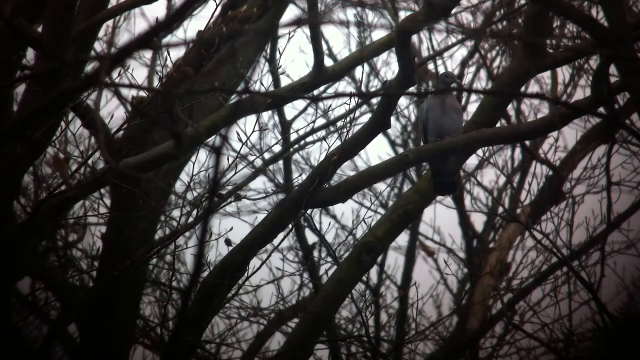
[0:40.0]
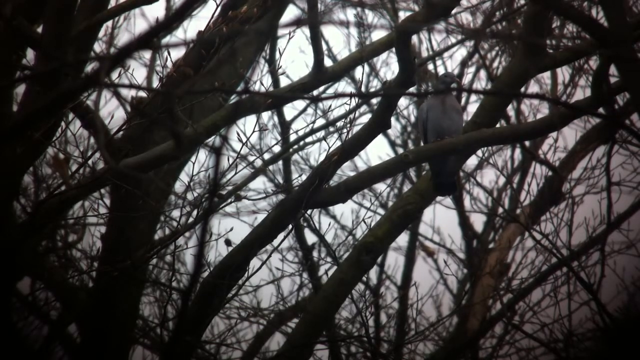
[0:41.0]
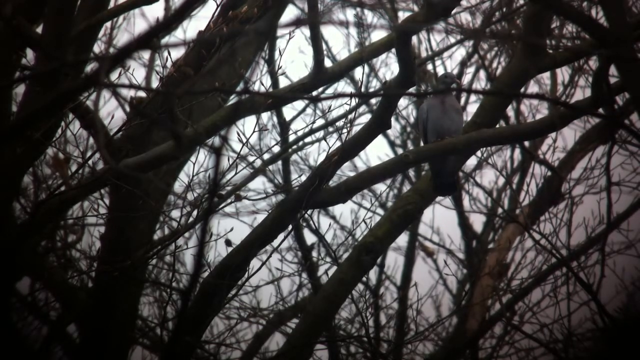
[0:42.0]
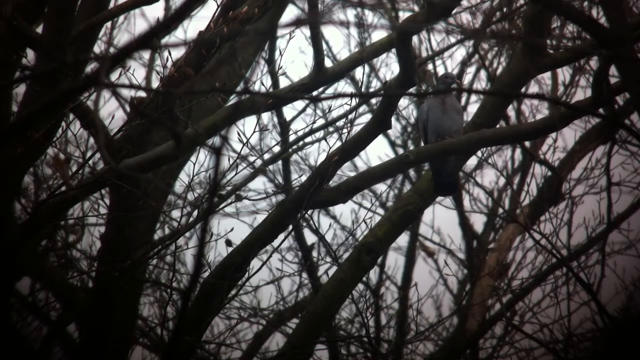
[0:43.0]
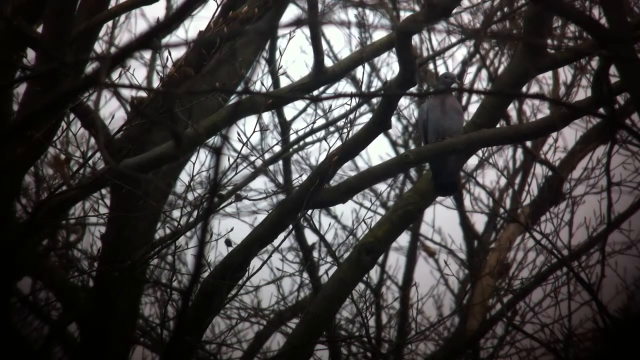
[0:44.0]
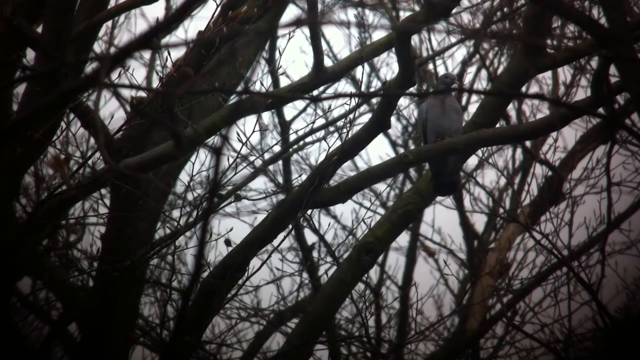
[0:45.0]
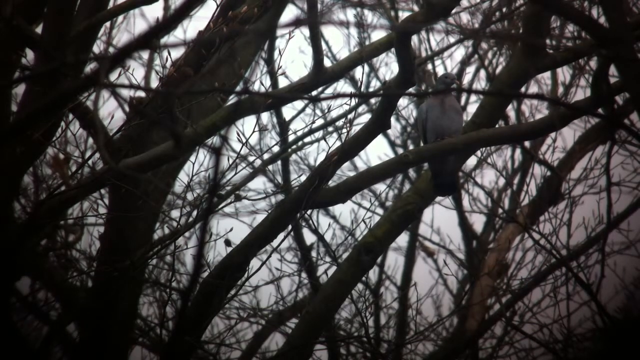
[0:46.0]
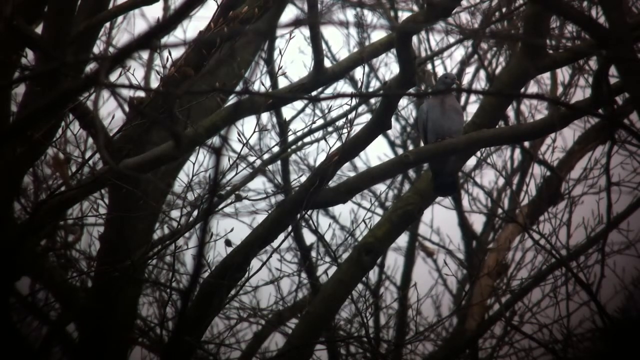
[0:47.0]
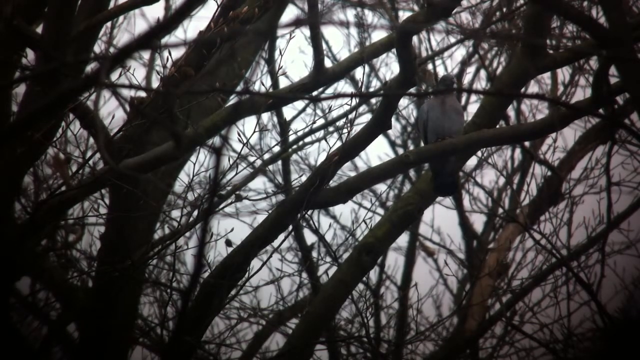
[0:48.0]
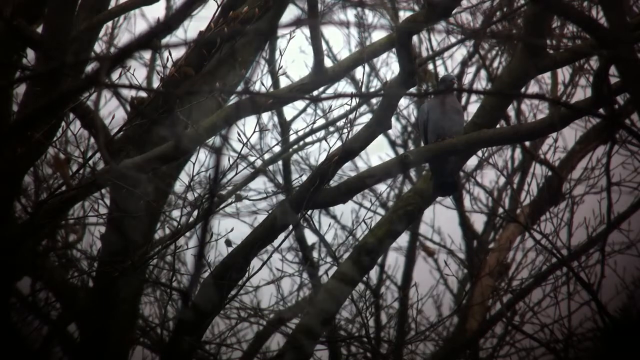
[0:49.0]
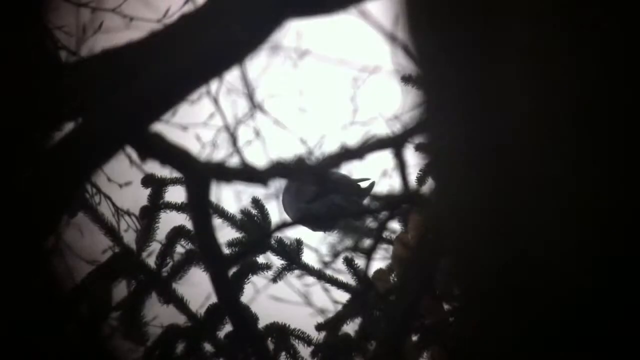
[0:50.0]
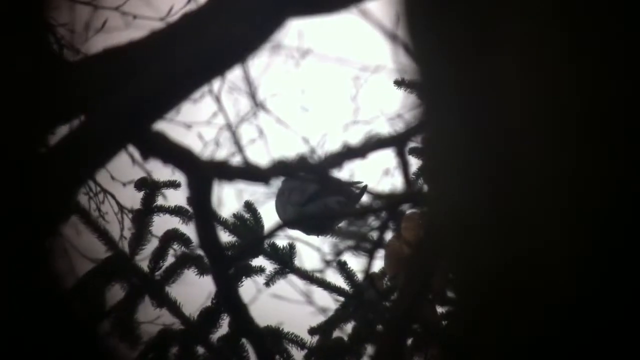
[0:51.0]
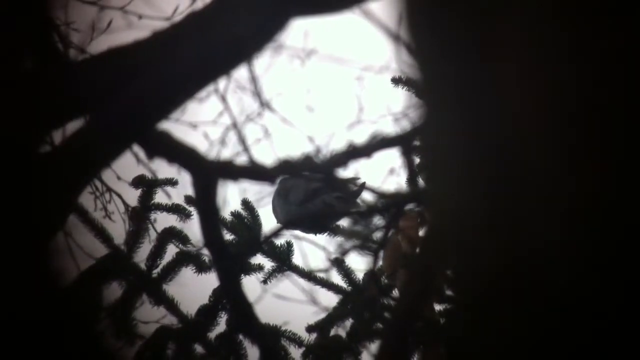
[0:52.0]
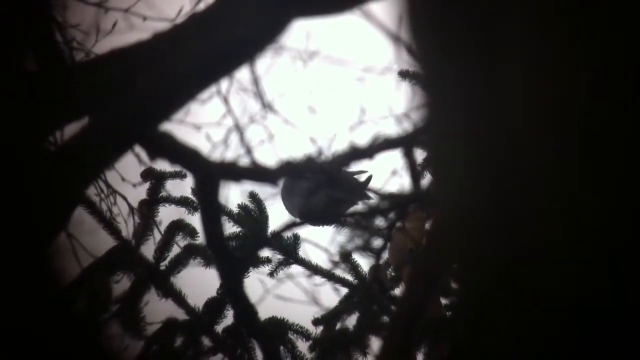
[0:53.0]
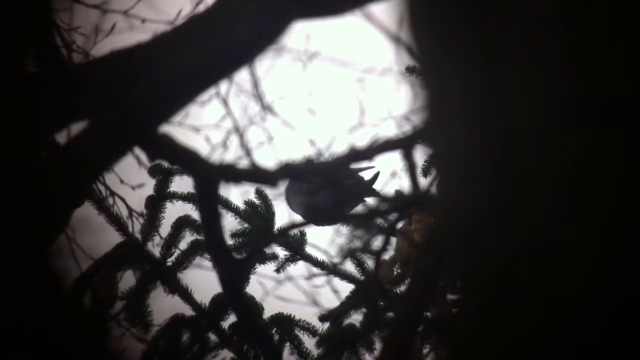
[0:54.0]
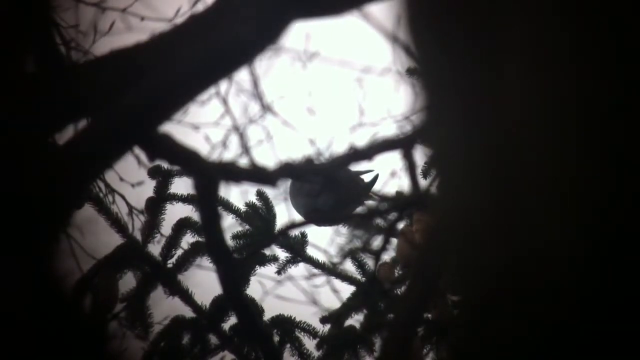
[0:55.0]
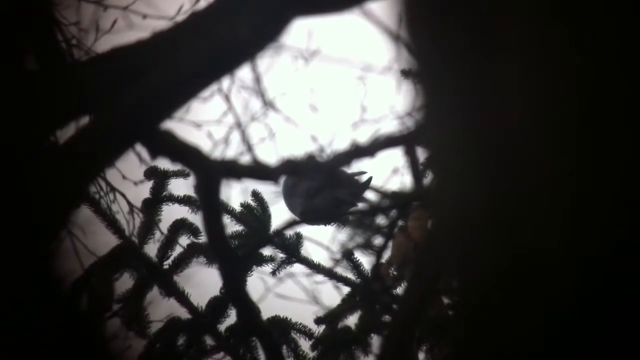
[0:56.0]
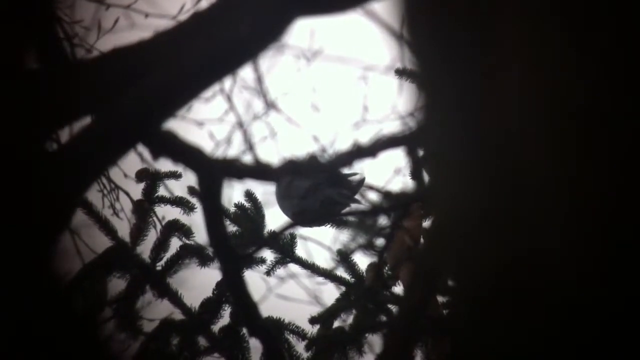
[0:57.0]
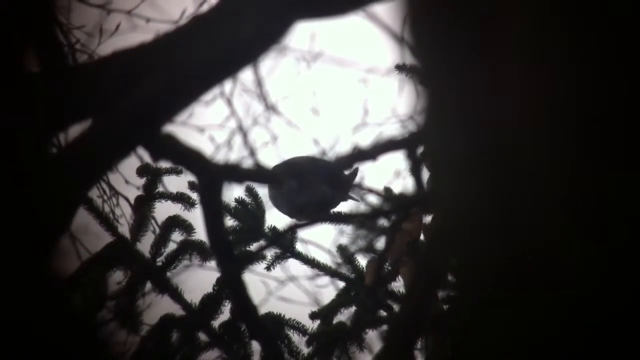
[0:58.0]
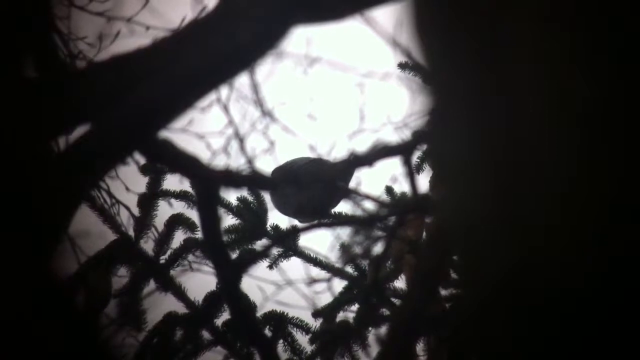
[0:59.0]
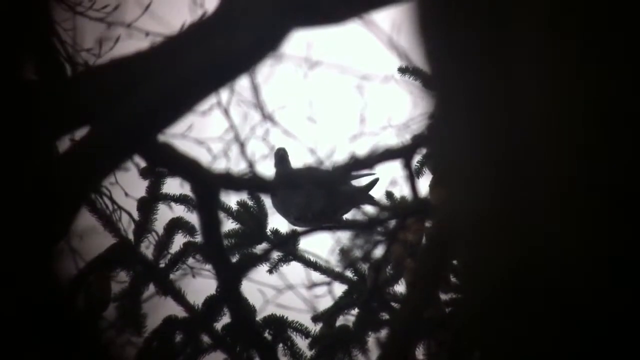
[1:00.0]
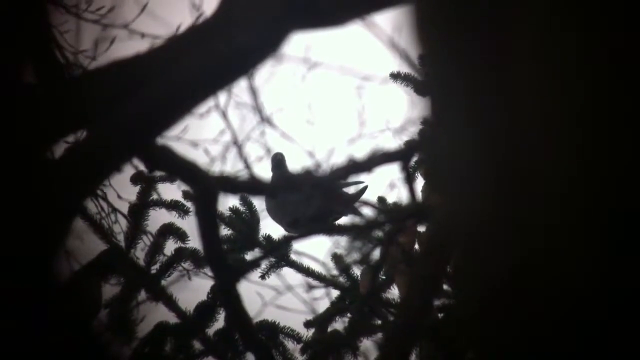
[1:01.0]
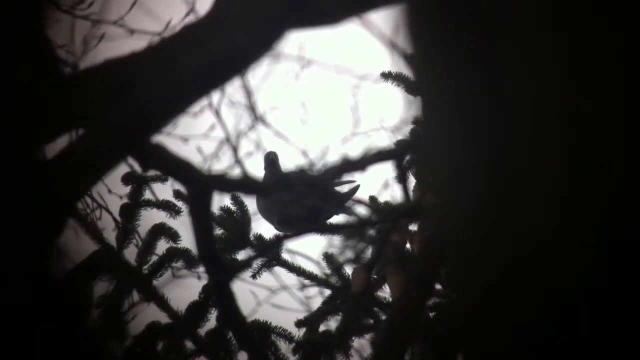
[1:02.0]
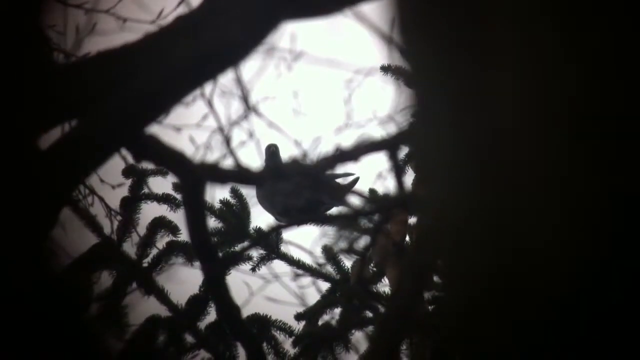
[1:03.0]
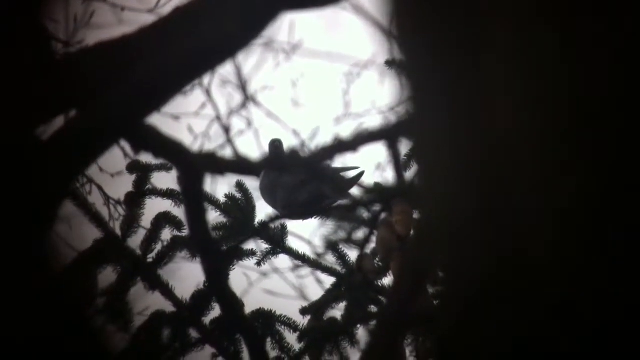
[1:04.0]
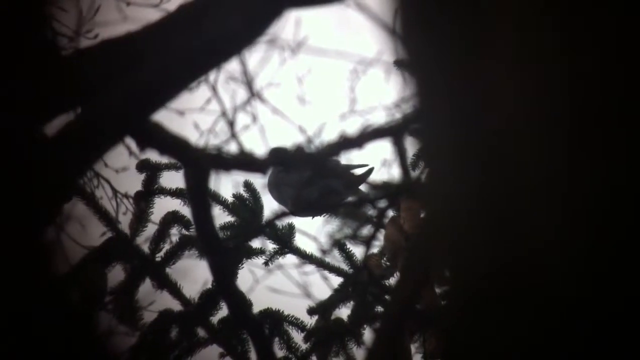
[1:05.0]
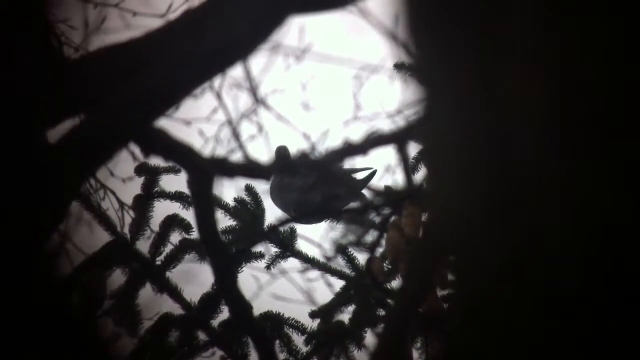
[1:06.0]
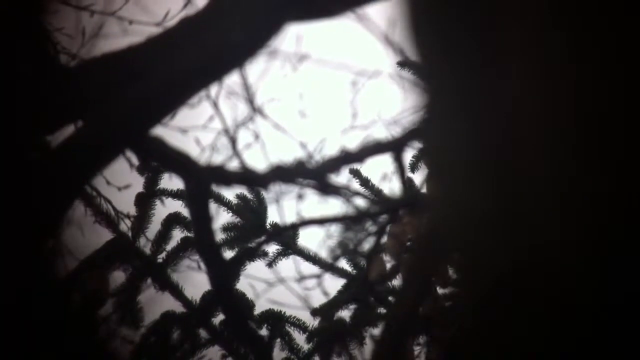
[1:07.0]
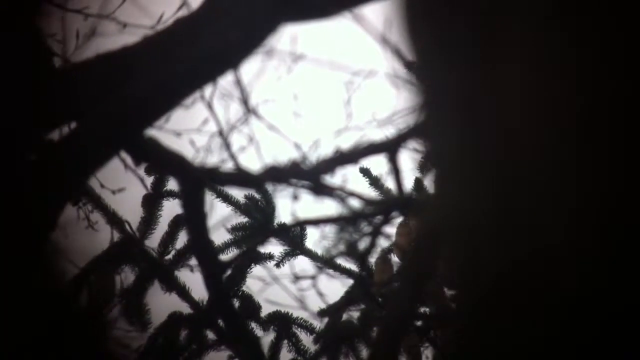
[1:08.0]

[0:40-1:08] The bird is still high up in the trees, moving its head from left to right, and it looks very calm, not stressed. After showing the bird still sitting there, the video fades into a different scene, this time viewing the bird from beneath the trees. The bird is standing on the limb with its head turned, then starts looking around. The tree limbs begin moving back and forth, possibly from a breeze or from the person filming accidentally hitting the branches. As the branches move, the bird looks directly at the person filming, then leaps into the air and flies away.